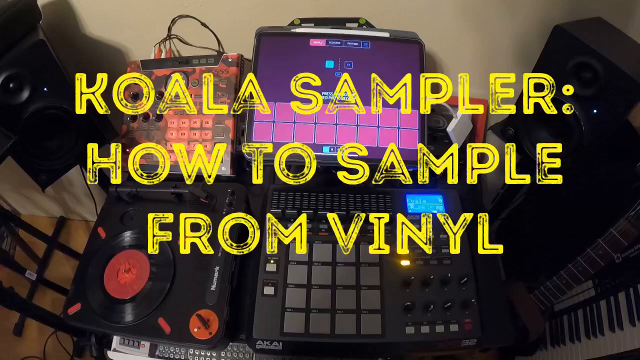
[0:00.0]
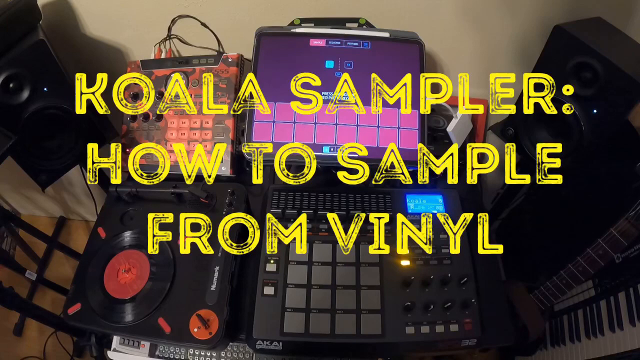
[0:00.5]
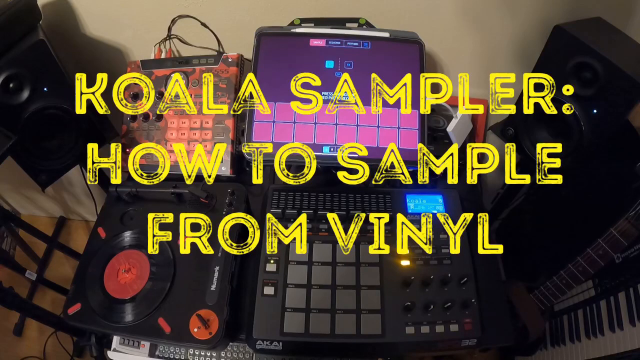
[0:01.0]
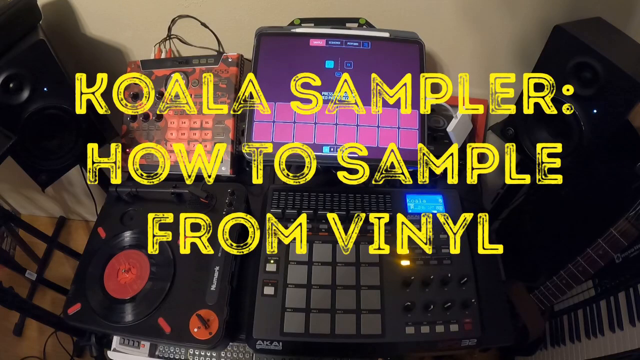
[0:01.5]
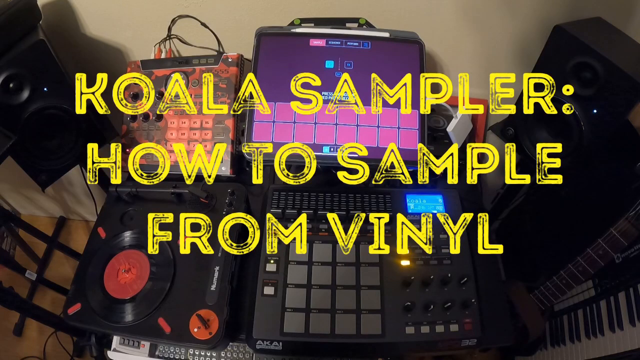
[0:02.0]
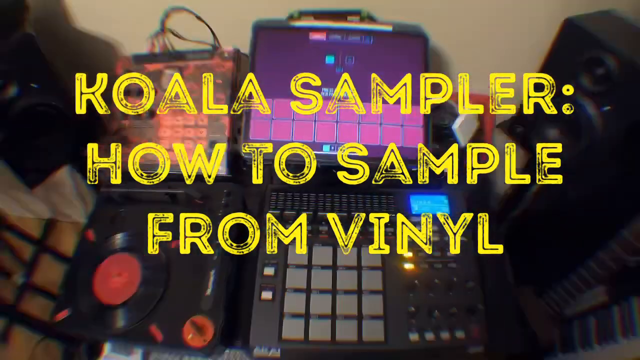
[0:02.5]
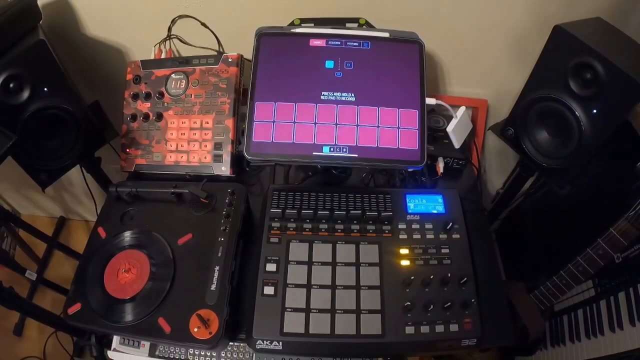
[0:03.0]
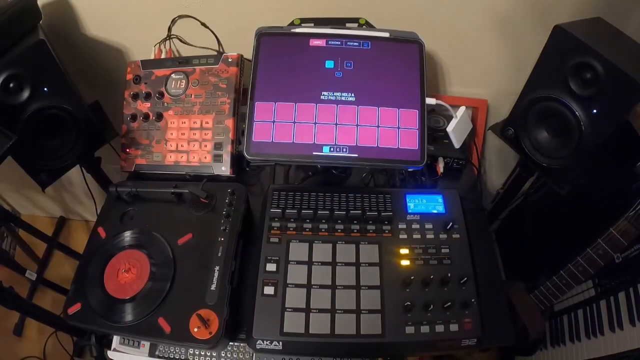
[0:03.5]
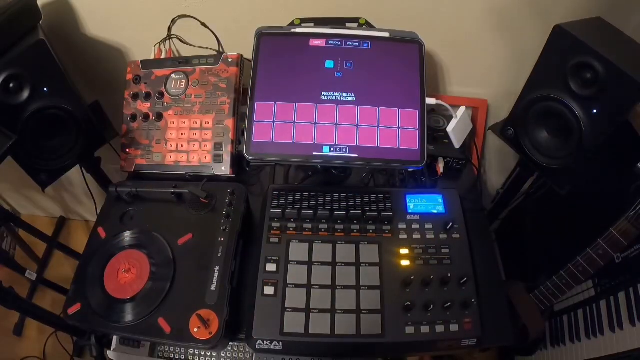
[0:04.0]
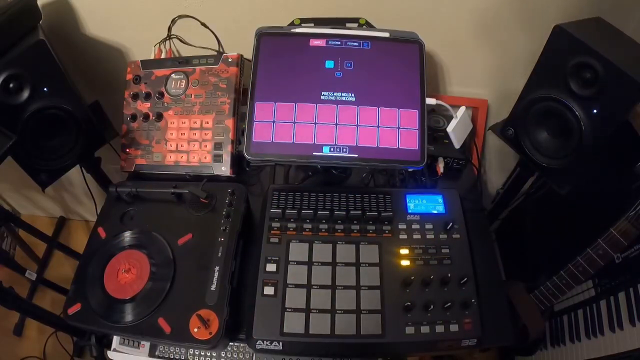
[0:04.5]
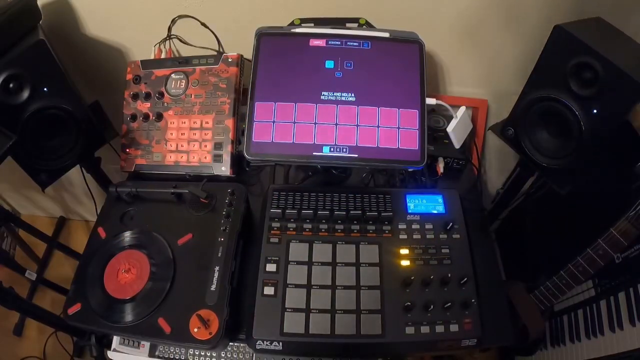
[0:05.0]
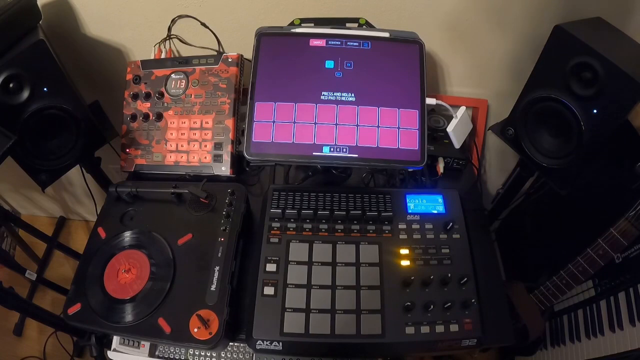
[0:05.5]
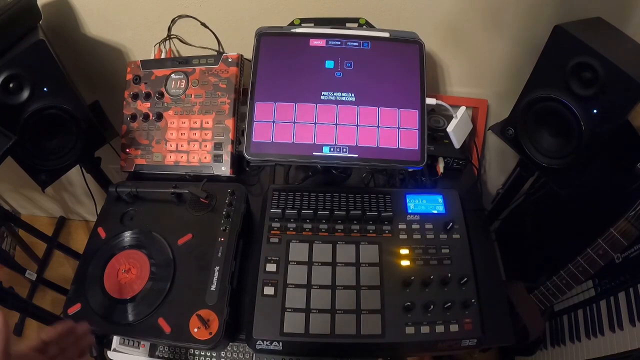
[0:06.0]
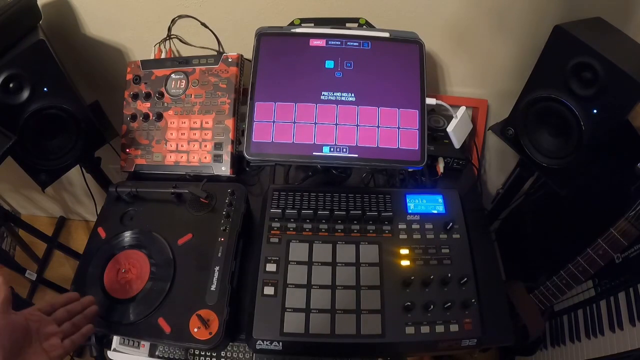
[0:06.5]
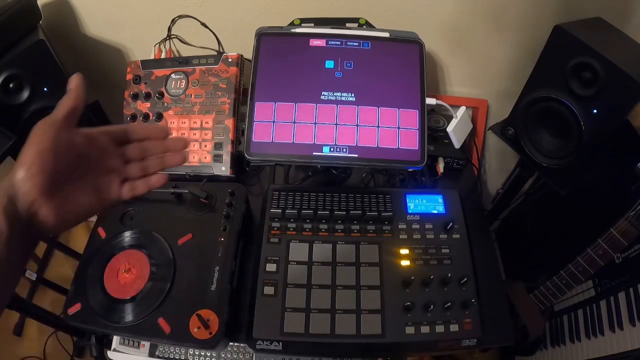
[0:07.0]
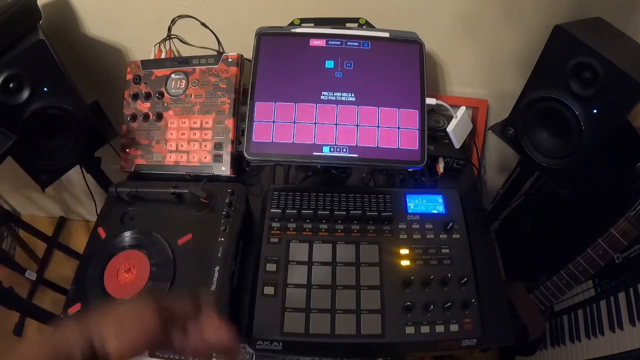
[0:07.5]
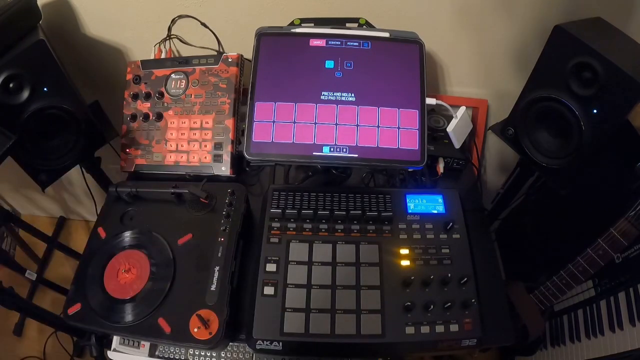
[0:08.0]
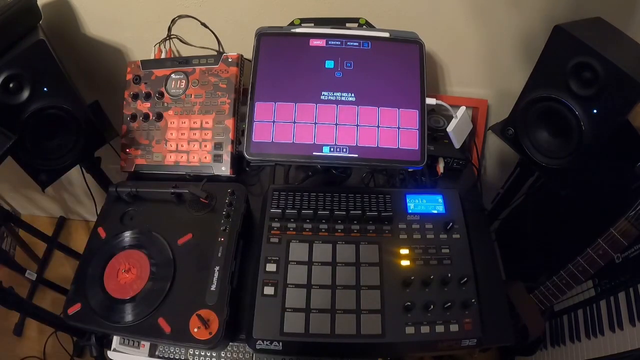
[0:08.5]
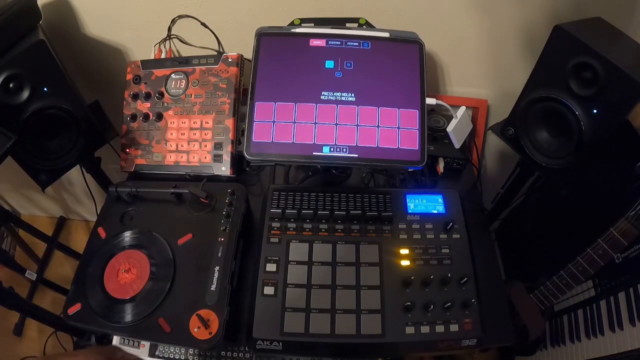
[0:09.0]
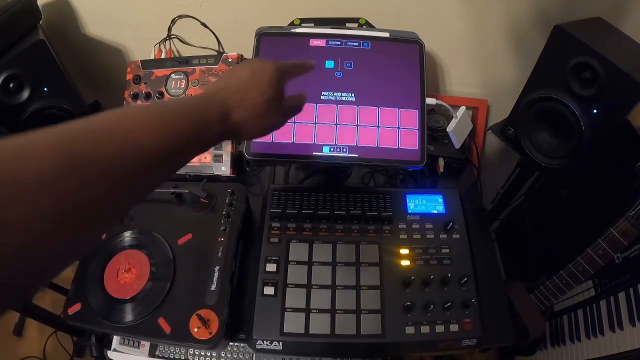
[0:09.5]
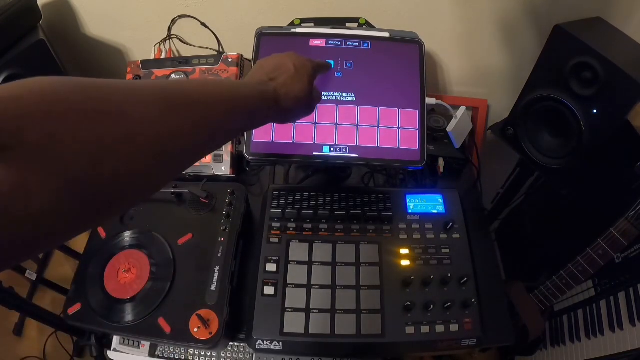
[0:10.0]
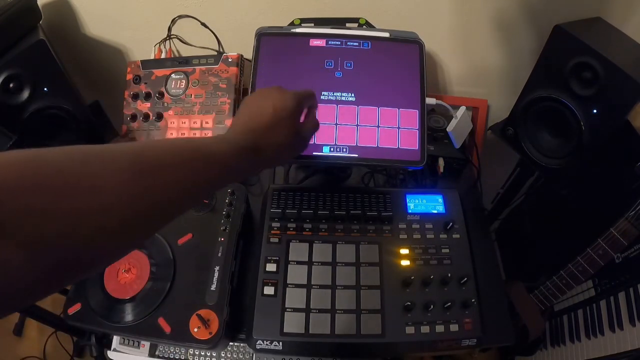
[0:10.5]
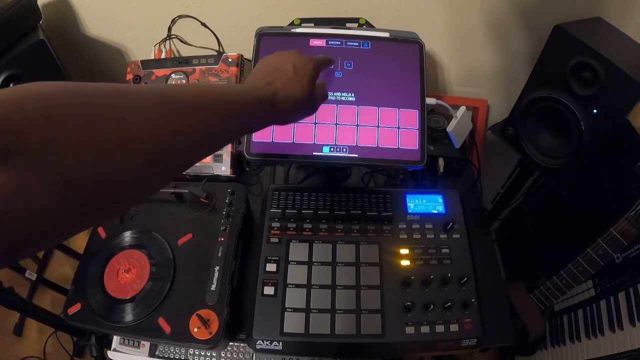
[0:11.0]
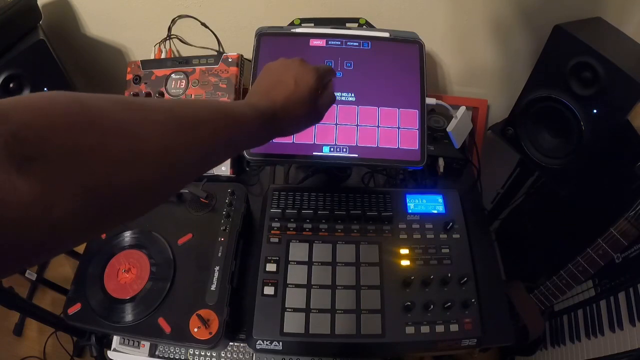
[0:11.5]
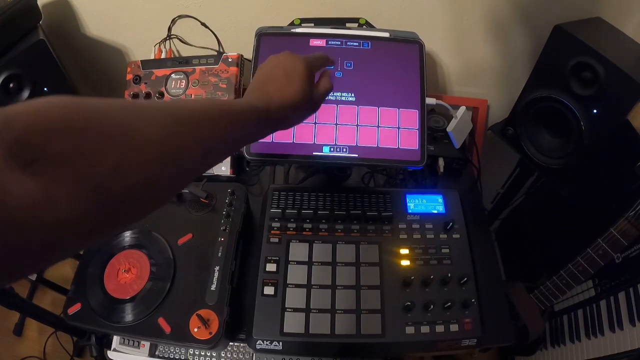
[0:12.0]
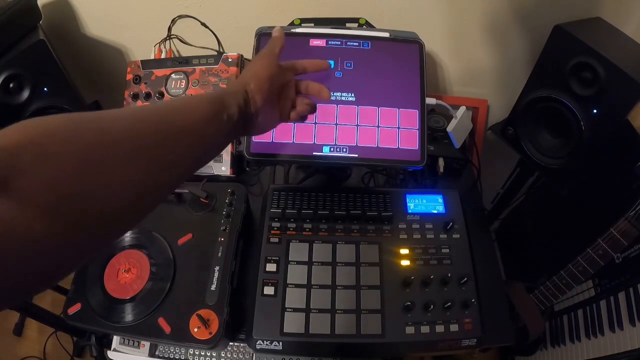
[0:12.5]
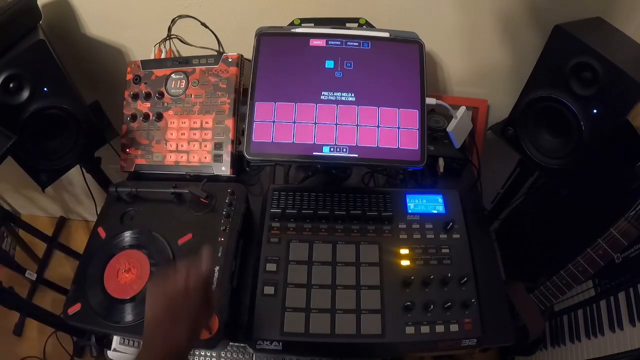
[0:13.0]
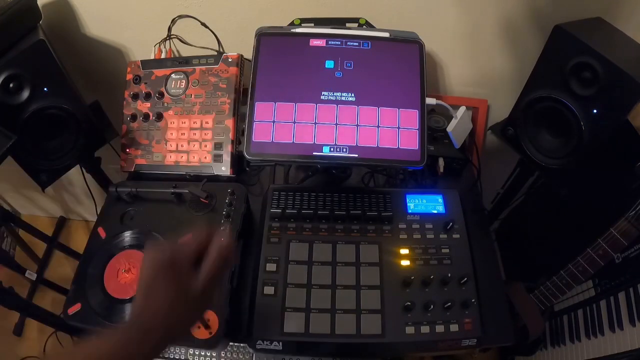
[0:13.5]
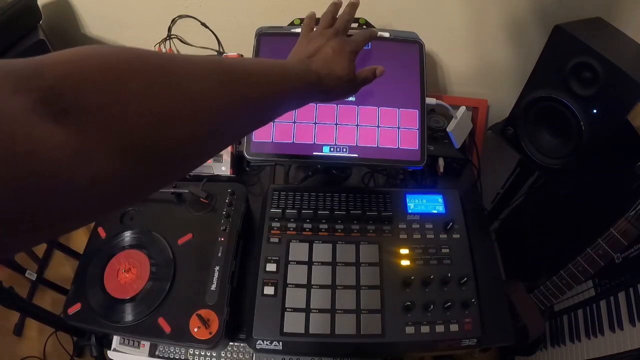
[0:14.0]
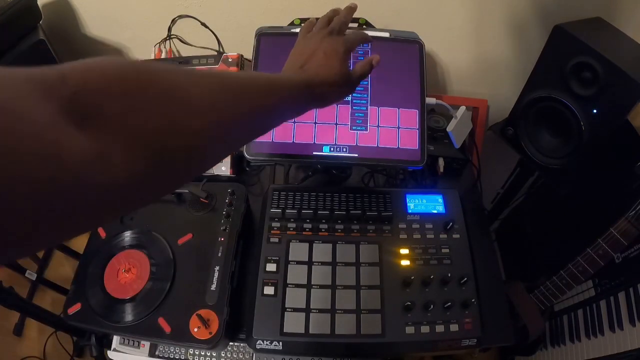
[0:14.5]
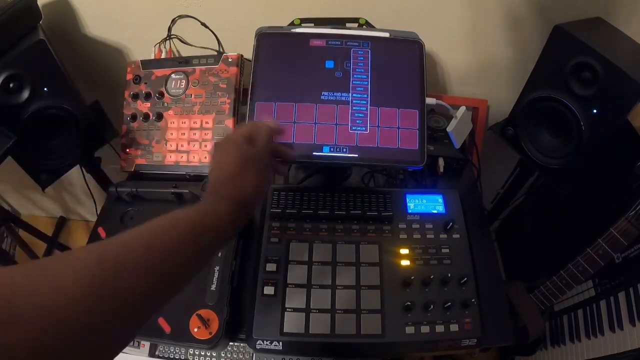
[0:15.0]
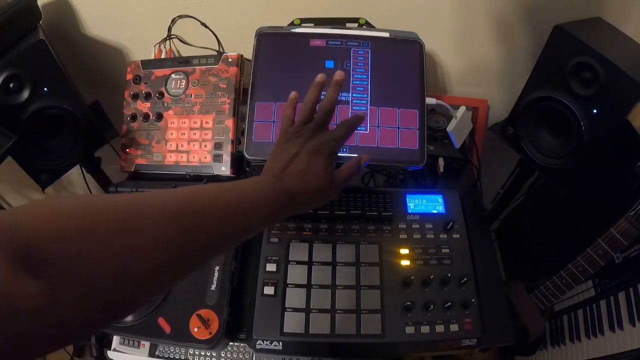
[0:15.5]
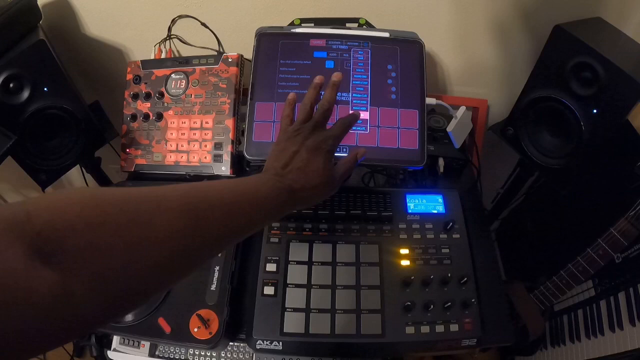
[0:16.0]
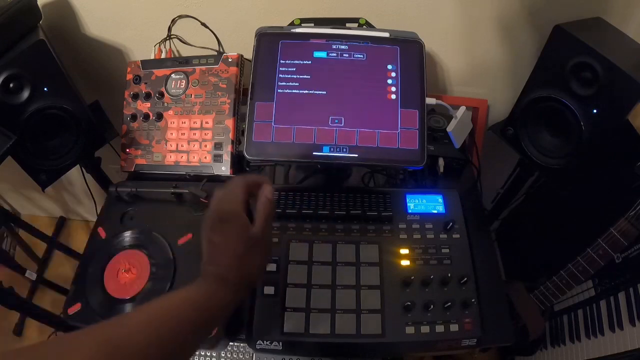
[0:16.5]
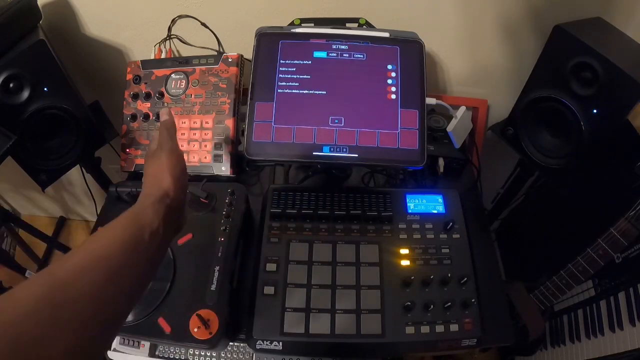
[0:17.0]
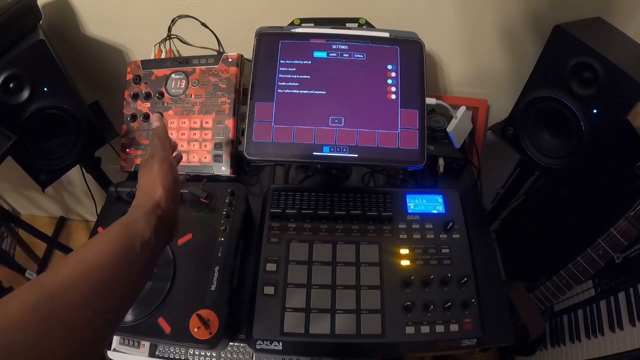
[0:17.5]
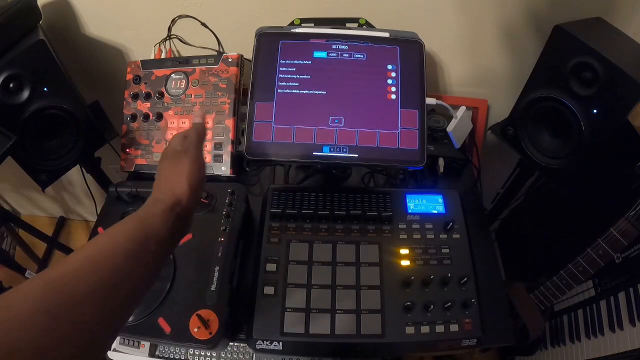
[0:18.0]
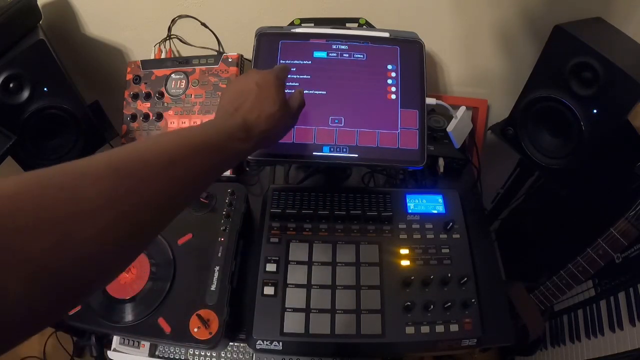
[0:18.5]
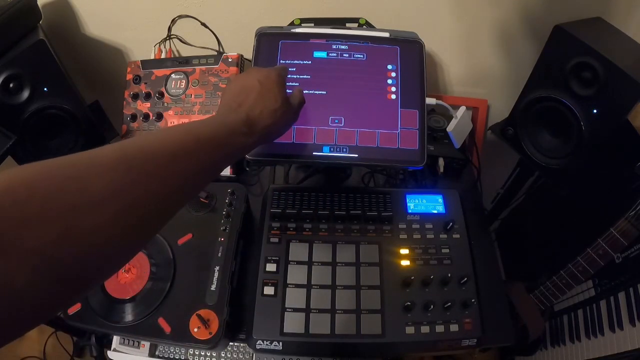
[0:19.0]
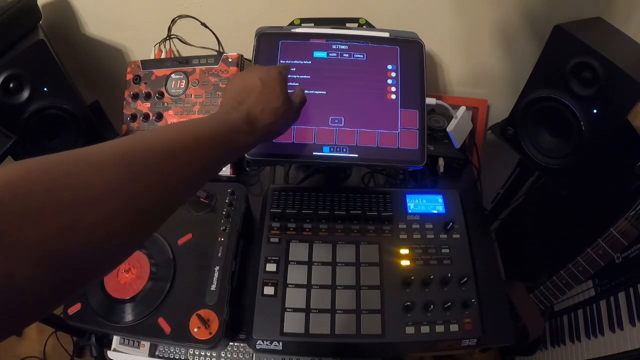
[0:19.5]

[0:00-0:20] Text on the screen reads "Koala Sampler, how to sample from vinyl." Audio equipment is in the background, including speakers and some type of electronic pads used for creating music. There also appears to be a turntable with a vinyl record on it, in the lower left. A person points onto one of the pads, which has several different buttons and is an interactive touchscreen. The person taps on the screen of the audio sampling equipment with a finger of their left hand, and as they tap different areas of the screen, different menus come up.